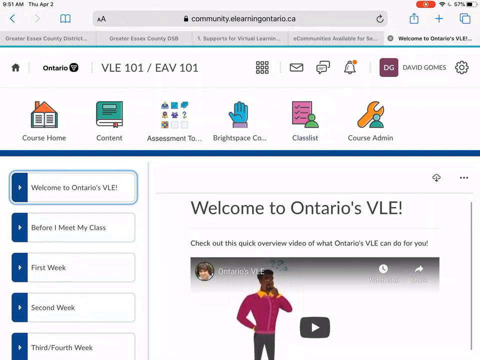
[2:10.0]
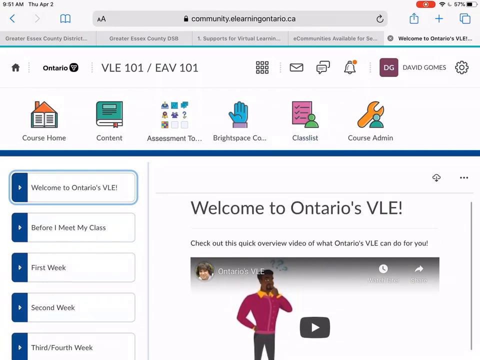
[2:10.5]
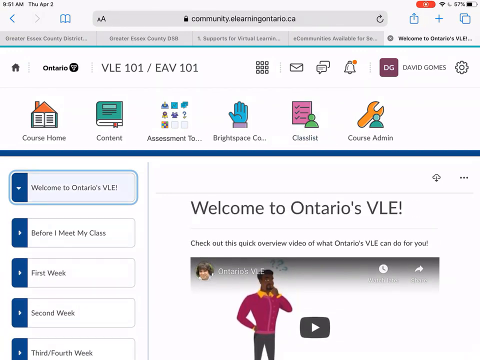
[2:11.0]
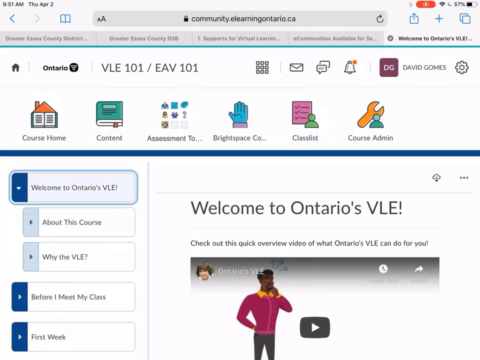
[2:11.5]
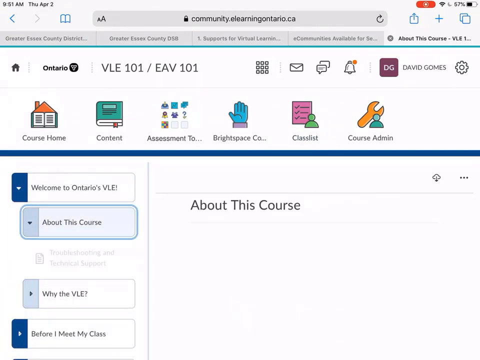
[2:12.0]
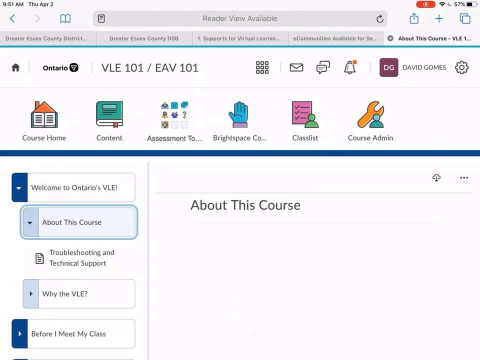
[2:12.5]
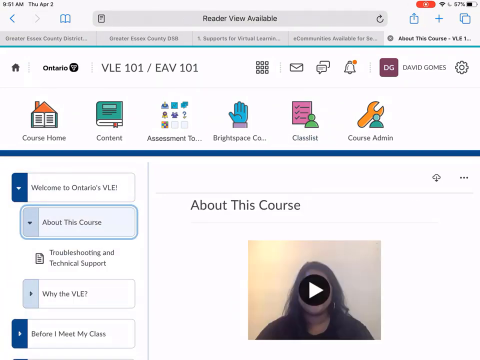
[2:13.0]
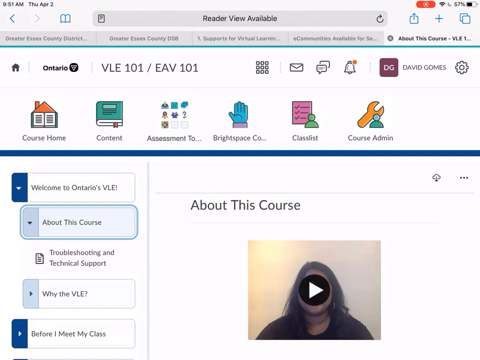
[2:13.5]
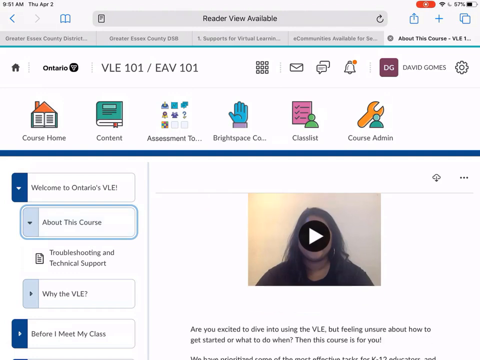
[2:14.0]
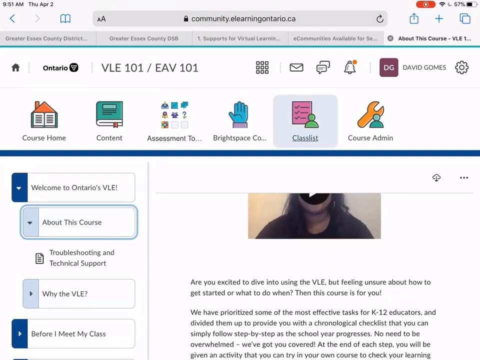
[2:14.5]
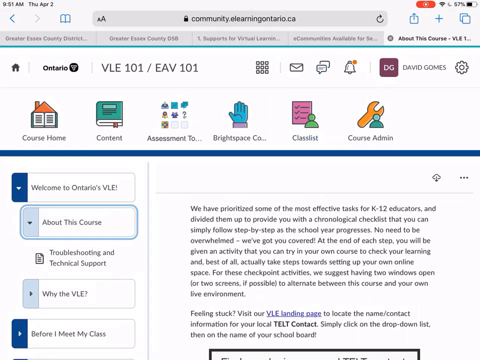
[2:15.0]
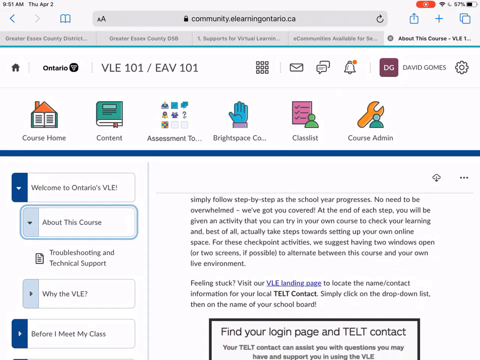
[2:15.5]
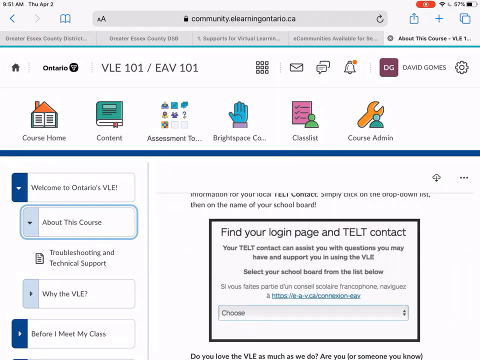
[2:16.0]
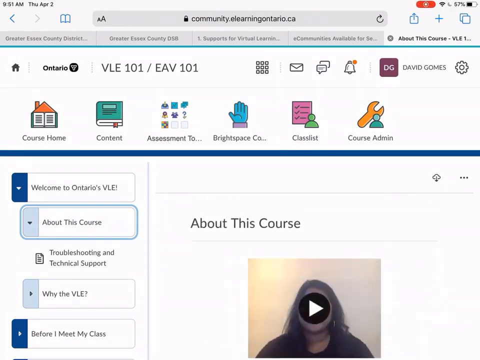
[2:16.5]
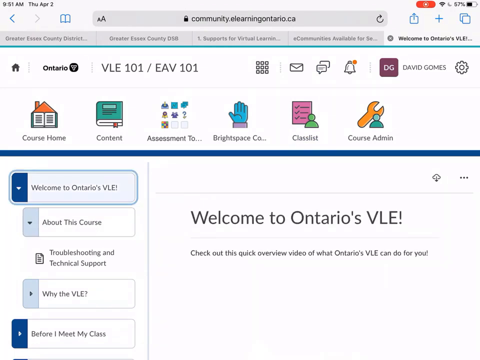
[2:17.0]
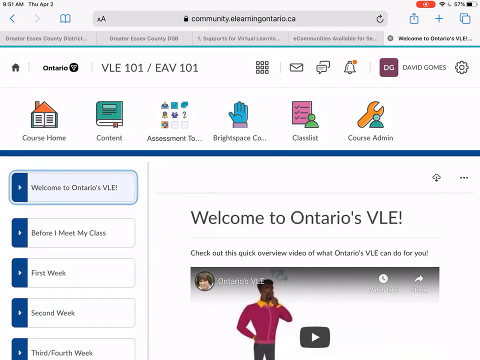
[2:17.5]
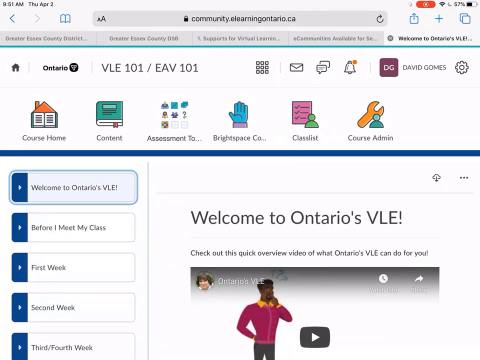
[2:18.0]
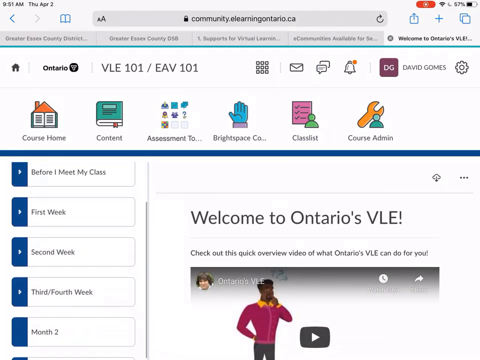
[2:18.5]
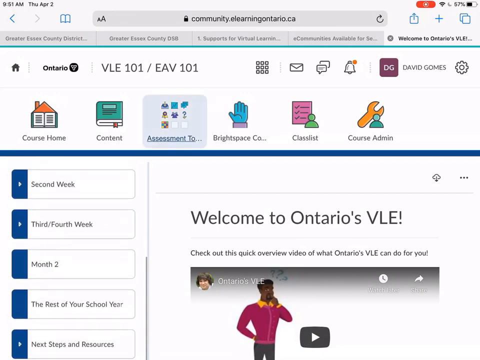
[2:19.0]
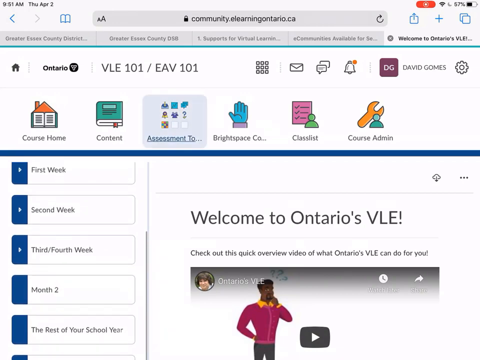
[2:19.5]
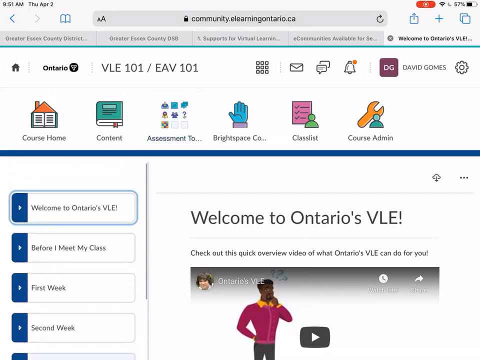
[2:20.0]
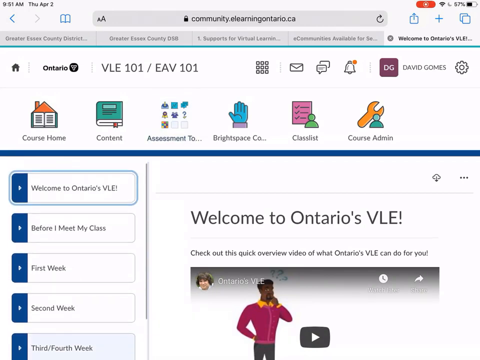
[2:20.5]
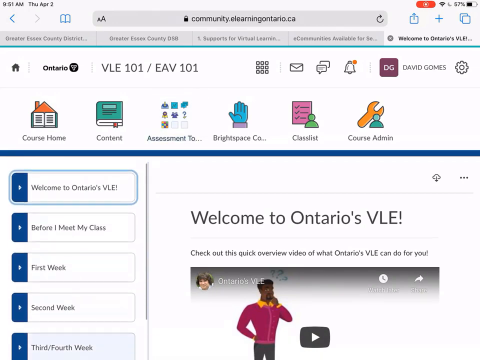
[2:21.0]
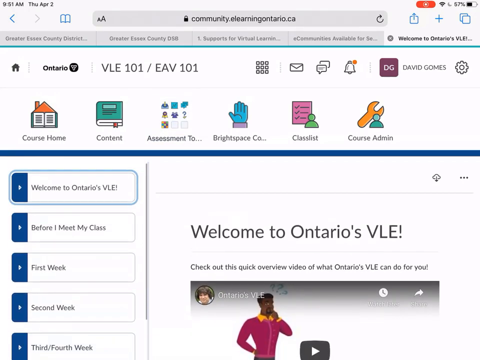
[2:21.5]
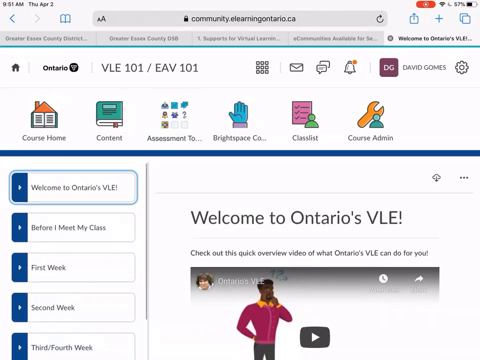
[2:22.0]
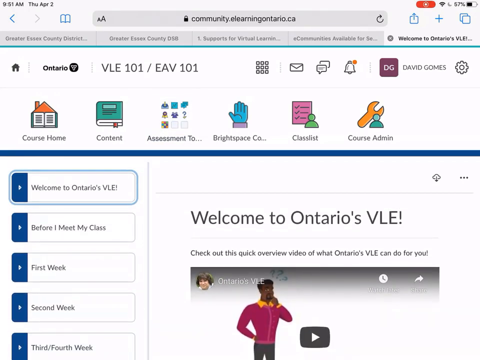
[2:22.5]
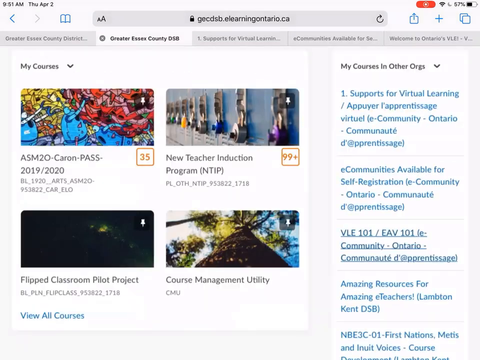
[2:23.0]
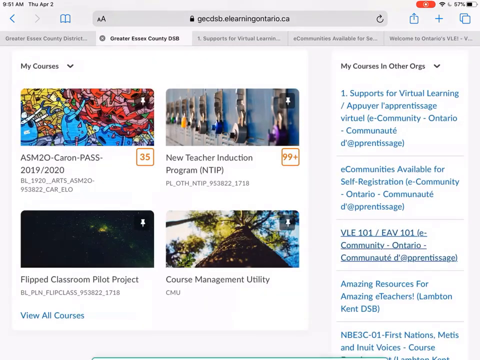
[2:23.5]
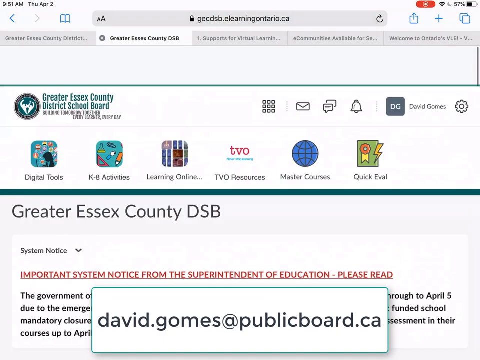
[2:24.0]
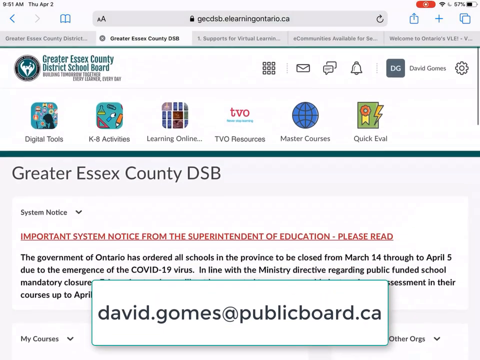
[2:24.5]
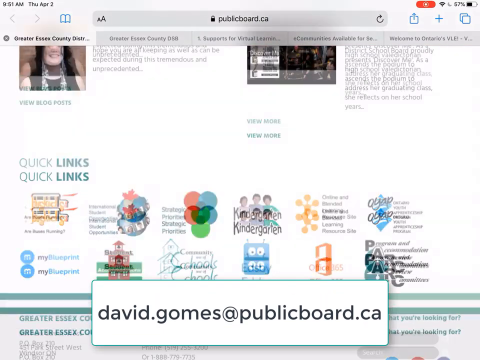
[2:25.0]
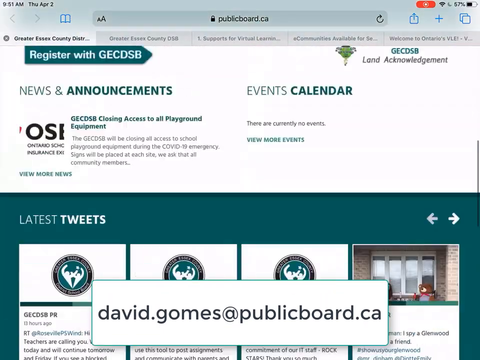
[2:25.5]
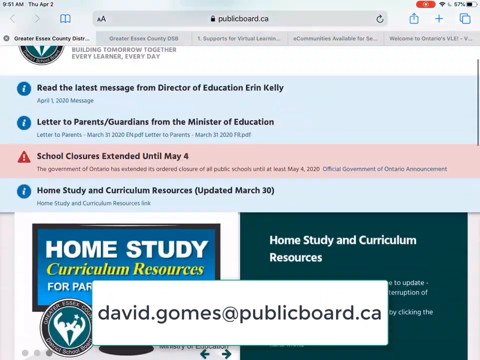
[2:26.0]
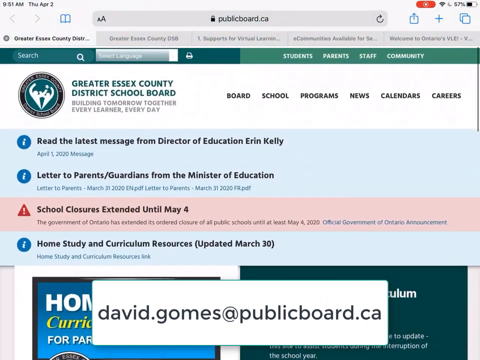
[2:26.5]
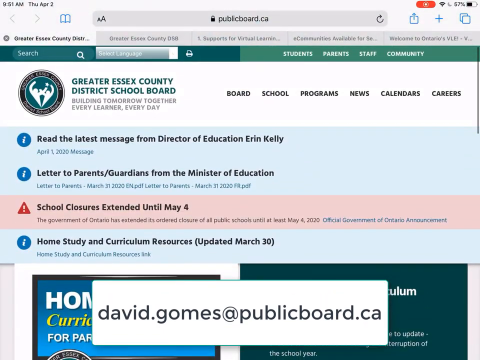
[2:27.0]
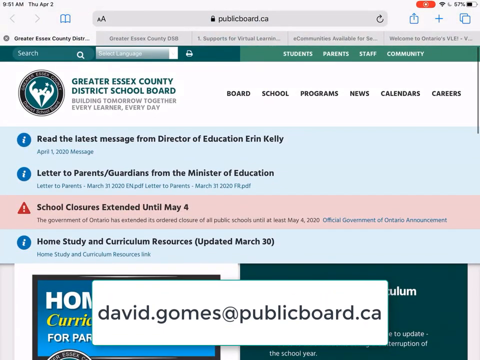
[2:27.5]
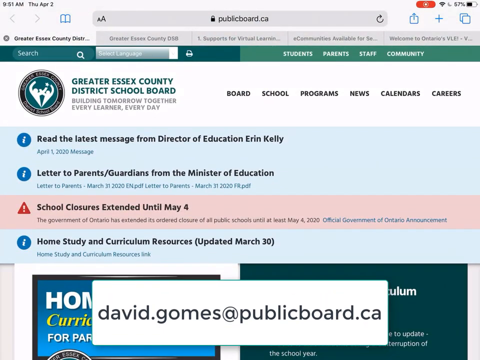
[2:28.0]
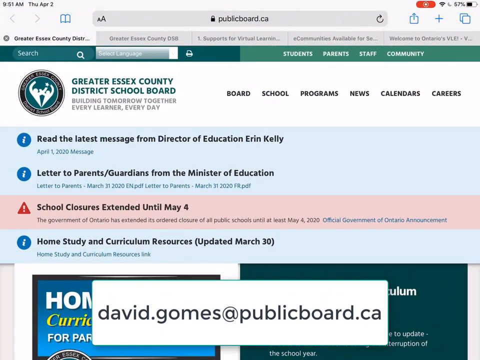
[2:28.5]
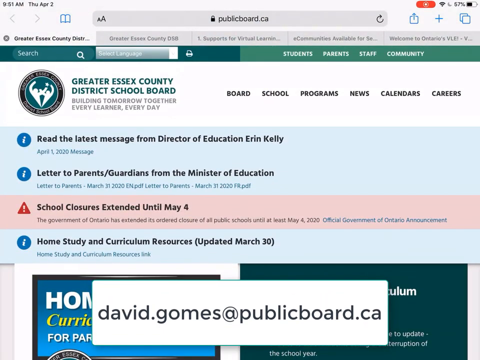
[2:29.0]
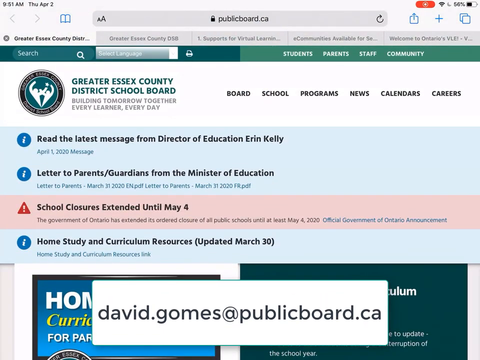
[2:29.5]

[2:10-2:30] A webpage for community.elearningontario.ca is shown. A banner across the top has six icons: "Course Home," "Content," "Assessment," "Right Space," "Class List," and "Course Admin." Below that, on the right-hand side, it reads "Welcome to Ontario's VLE. Check out this quick overview video of what Ontario's VLE can do for you," with a cartoon video below that can be watched. On the left-hand side, several tabs are arranged vertically in a column: "Welcome to Ontario's VLE," which is highlighted, then "Before I Meet My Class," "First Week," "Second Week," and "Third and Fourth Week." The Ontario VLE tab is clicked and something about the course opens up, then it is closed. The page is scrolled up and down for a moment, and then it goes back to the original page. At the bottom, a white text block pops up with black text reading "david.gomes@publicboard.ca."